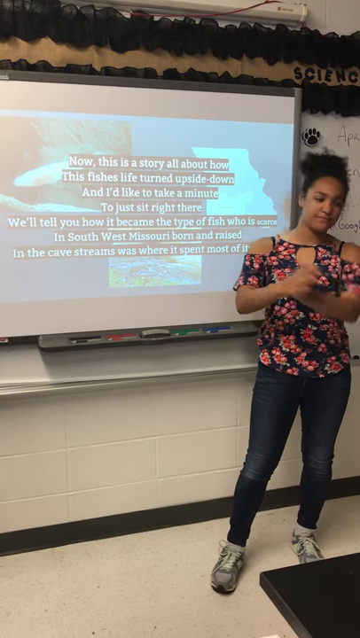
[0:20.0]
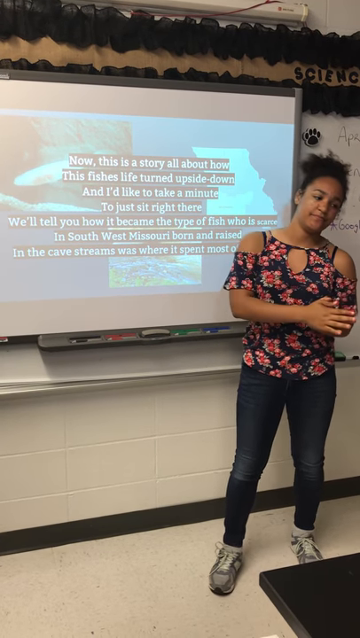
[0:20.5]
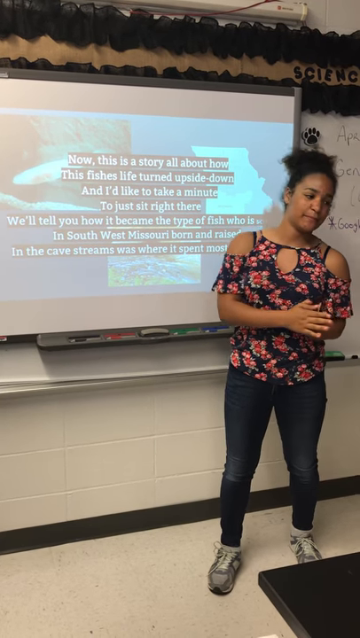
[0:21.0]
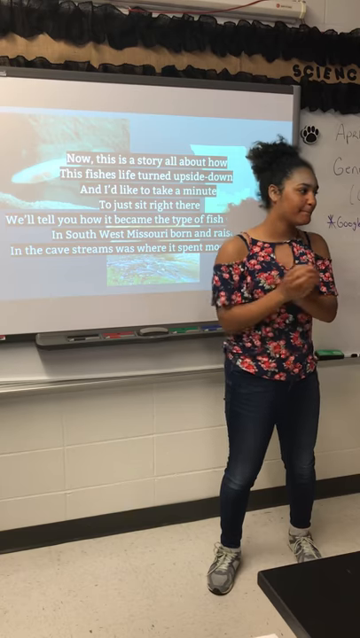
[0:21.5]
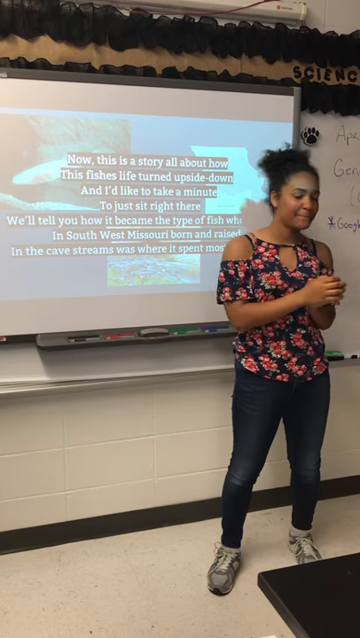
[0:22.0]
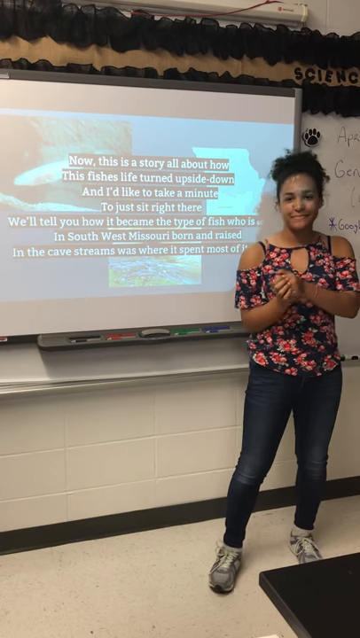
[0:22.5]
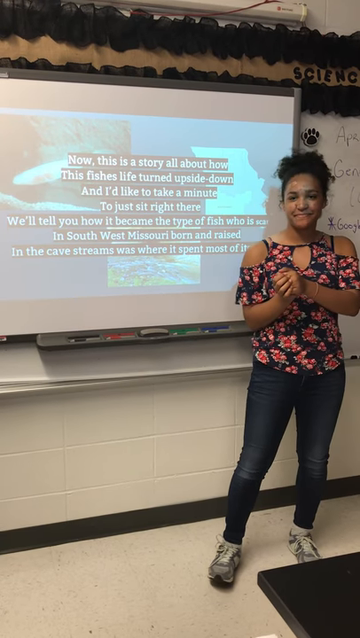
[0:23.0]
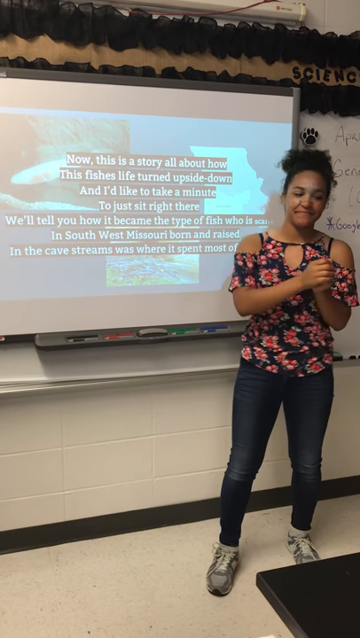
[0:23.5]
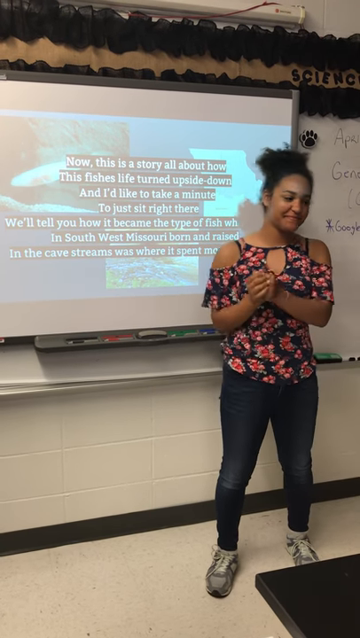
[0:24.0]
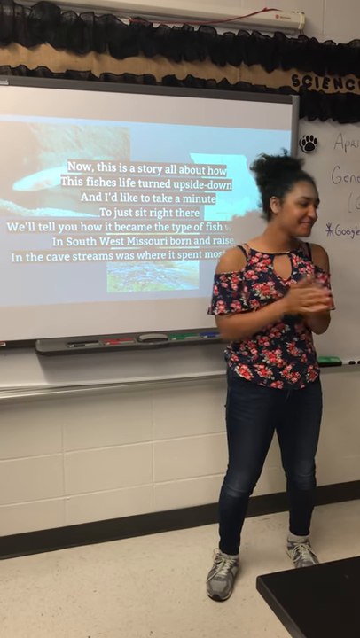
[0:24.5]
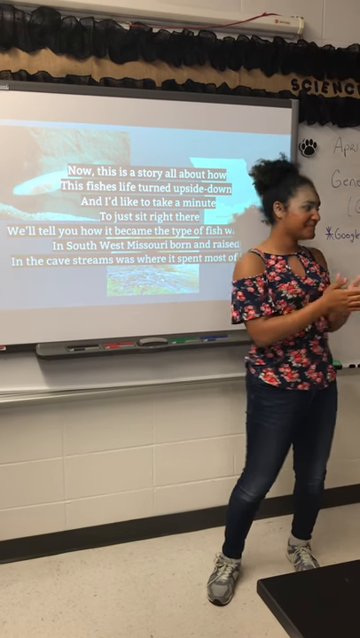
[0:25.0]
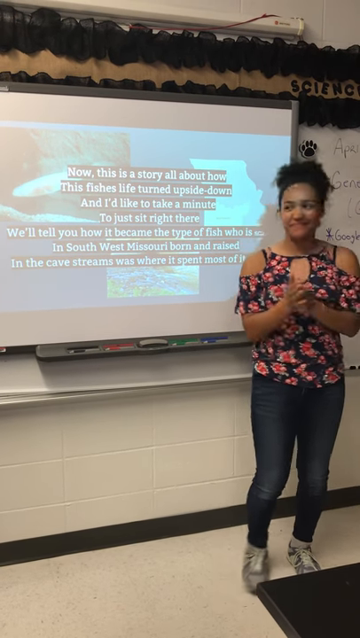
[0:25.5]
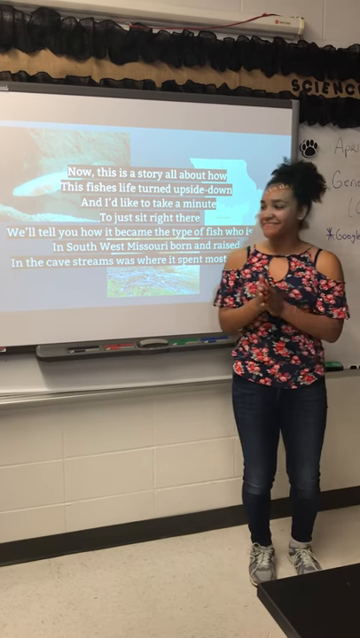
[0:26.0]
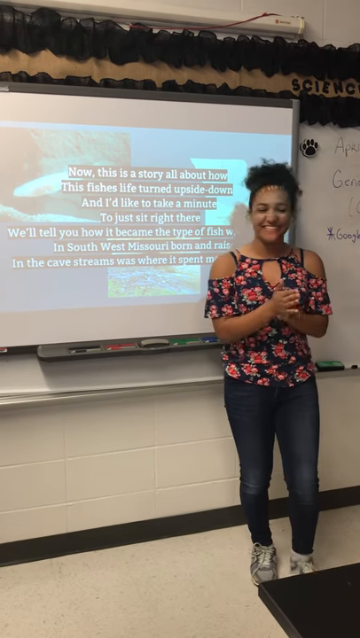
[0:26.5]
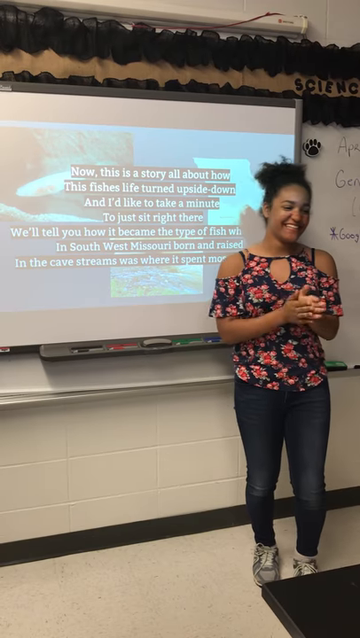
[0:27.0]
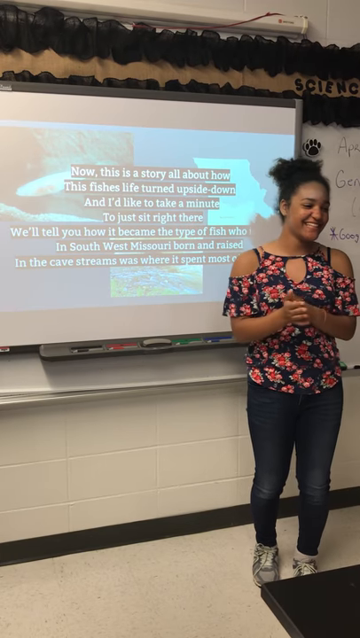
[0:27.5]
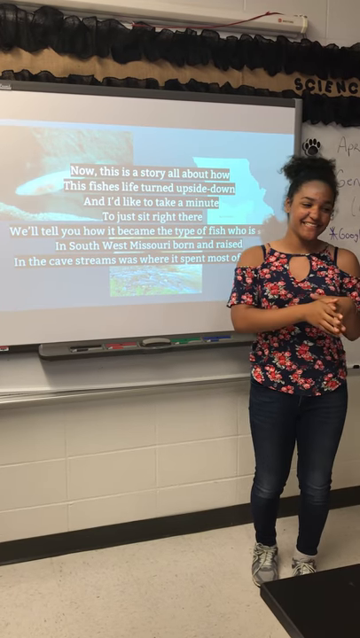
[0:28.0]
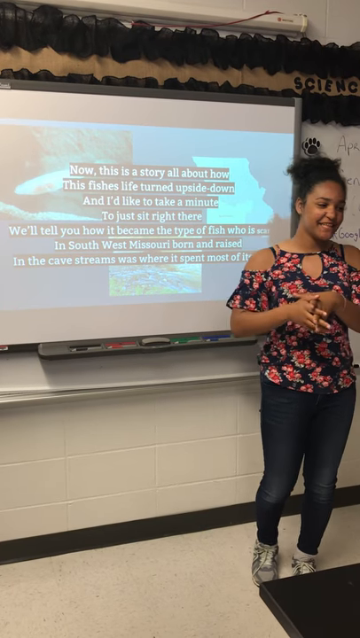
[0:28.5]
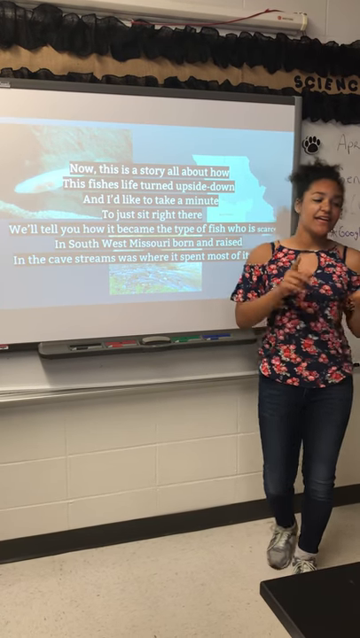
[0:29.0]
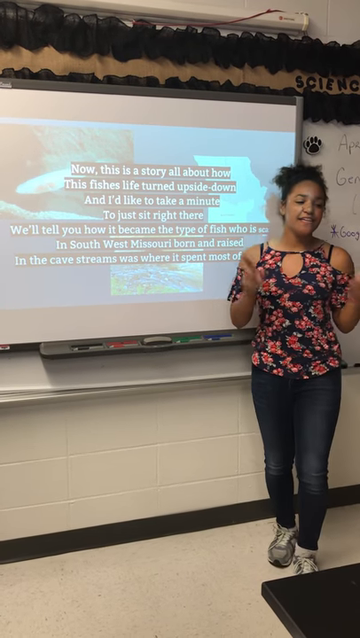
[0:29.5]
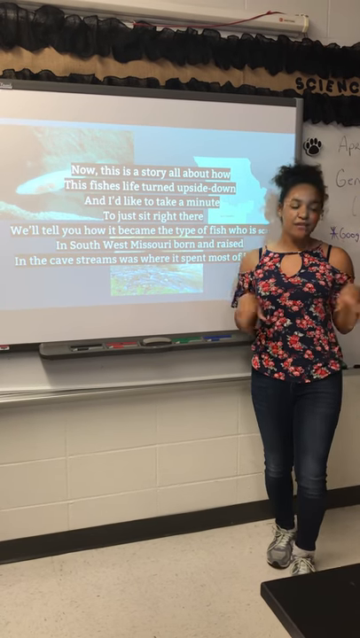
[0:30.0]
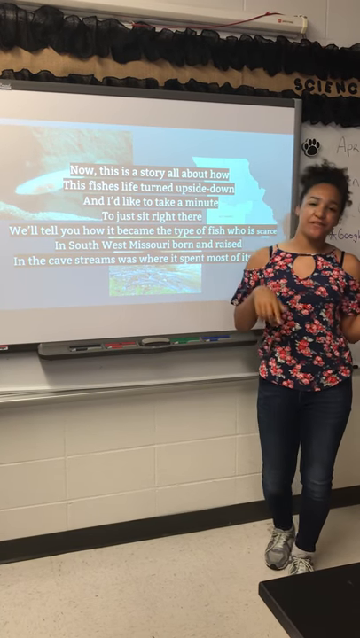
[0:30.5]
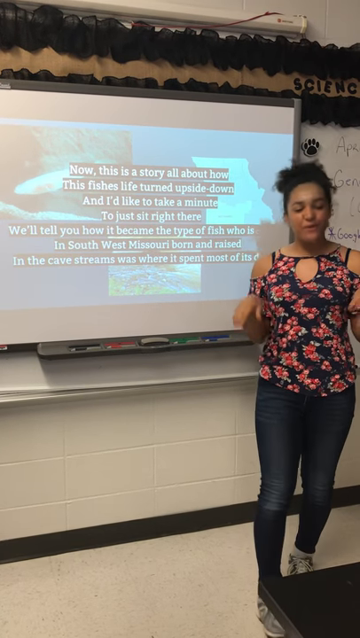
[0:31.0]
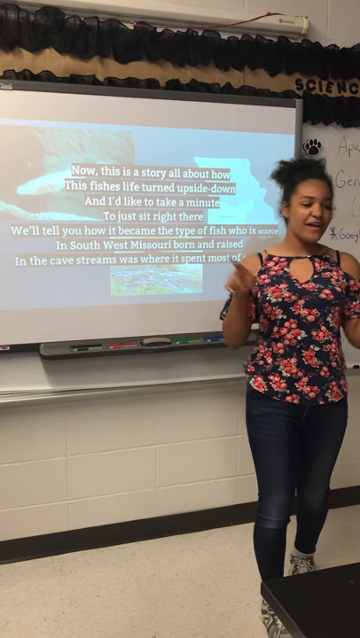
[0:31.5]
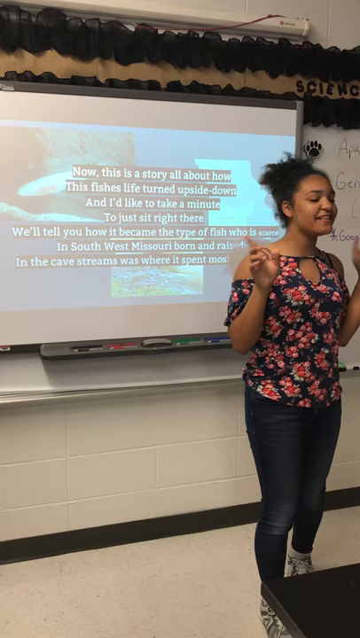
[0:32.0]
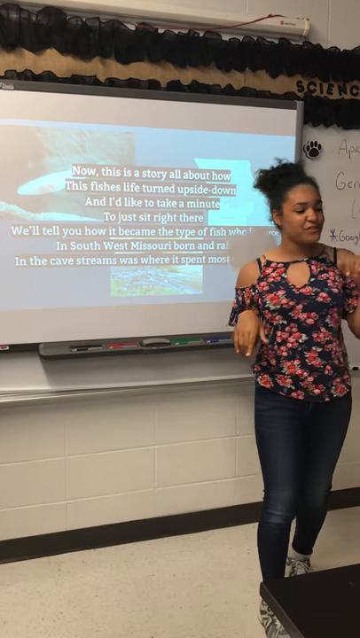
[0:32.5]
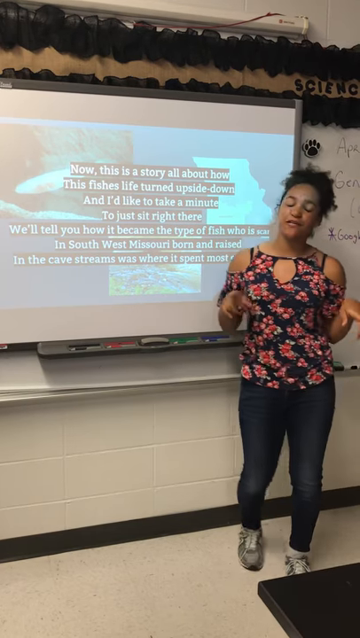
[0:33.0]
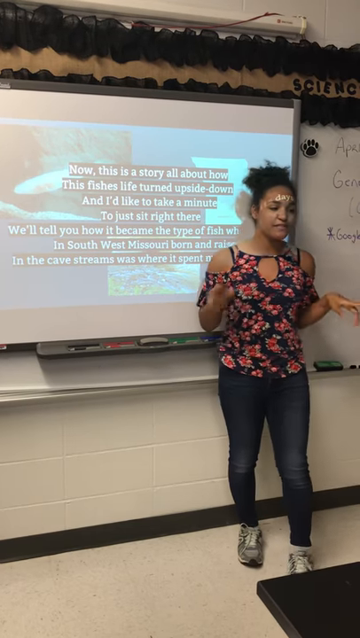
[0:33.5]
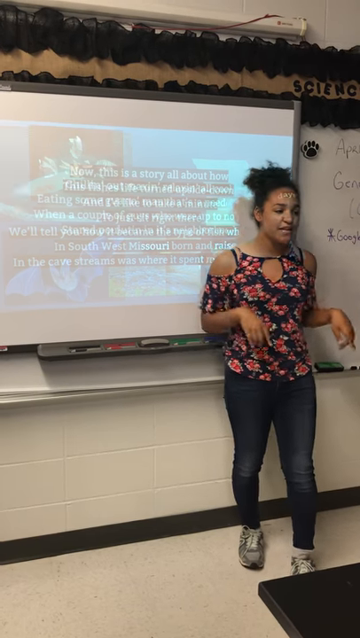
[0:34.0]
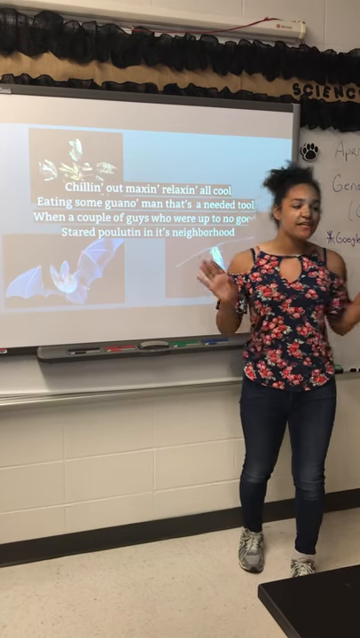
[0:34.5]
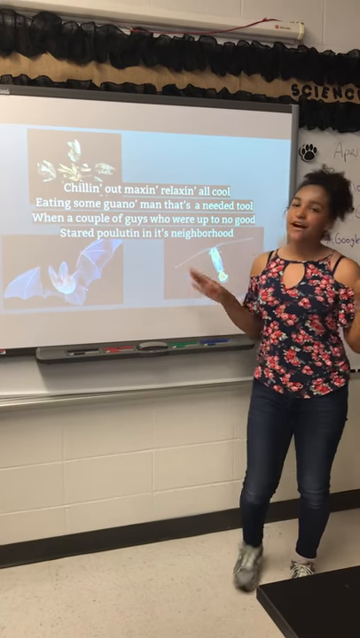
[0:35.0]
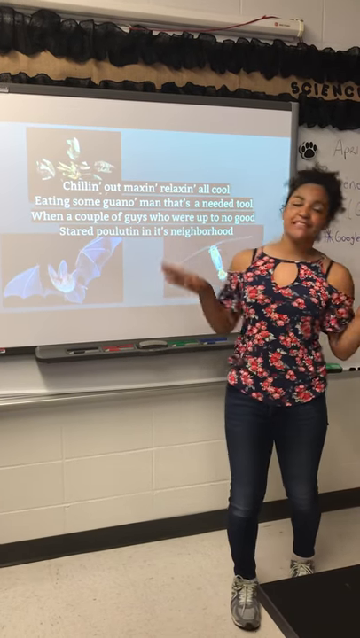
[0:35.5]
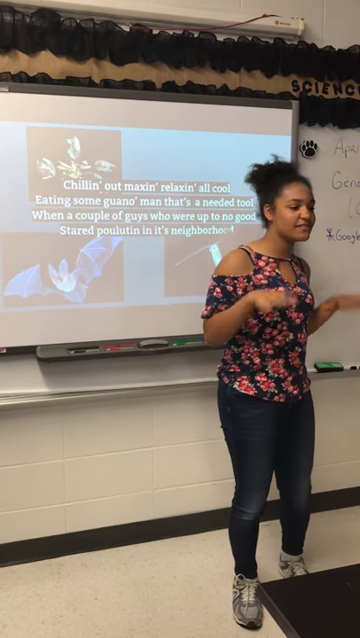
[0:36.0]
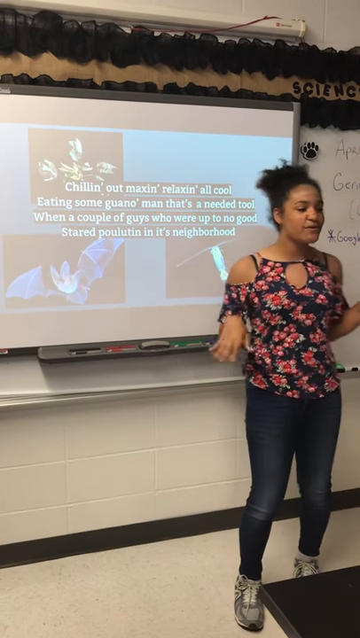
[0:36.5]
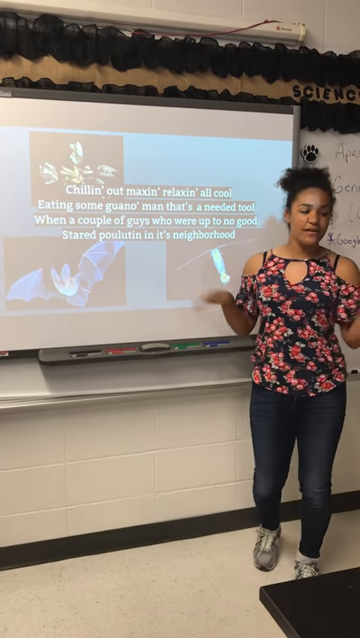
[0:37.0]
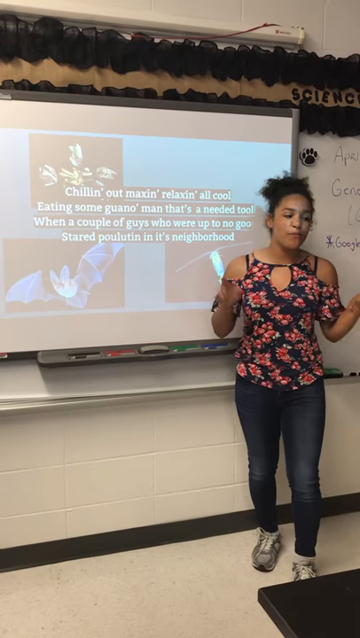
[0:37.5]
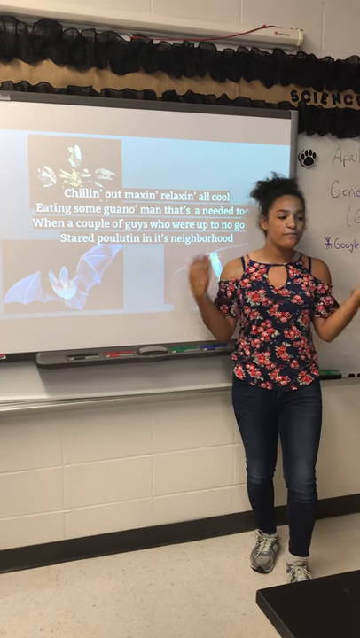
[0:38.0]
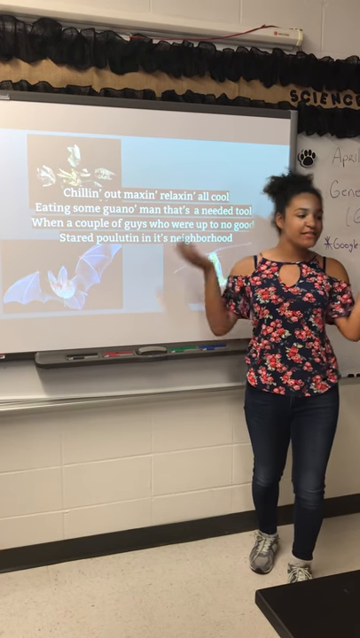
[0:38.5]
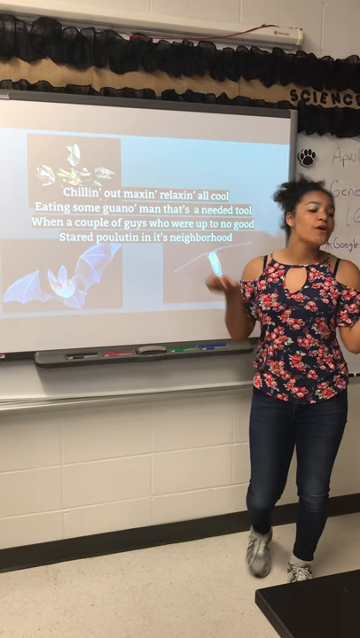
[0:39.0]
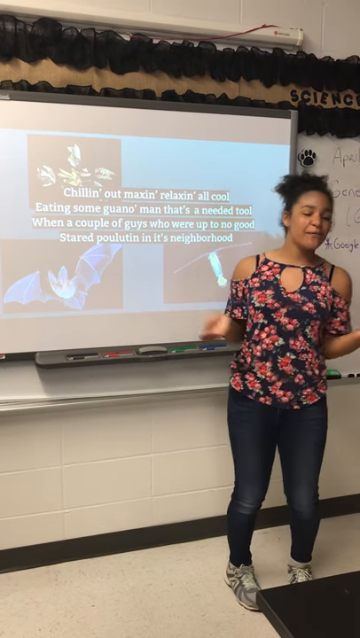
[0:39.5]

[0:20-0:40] The teacher moves her hands from side to side, smiling and trying to engage with the students. The projector displays what seems to be a song she uses to teach, about some kind of fishes born in Southwest Missouri, and about bats and fishes in the cave streams of Southwest Missouri. She is still the only one in the frame, wearing a flower shirt with jeans and sneakers, and looks to be of African descent. The setting seems to be a classroom at a school where biology or science is taught, apparently a middle school or high school based on the content.